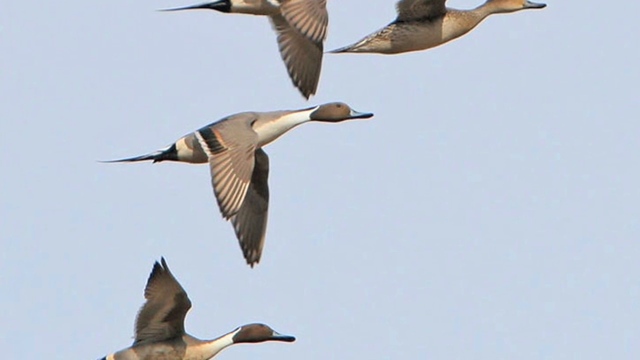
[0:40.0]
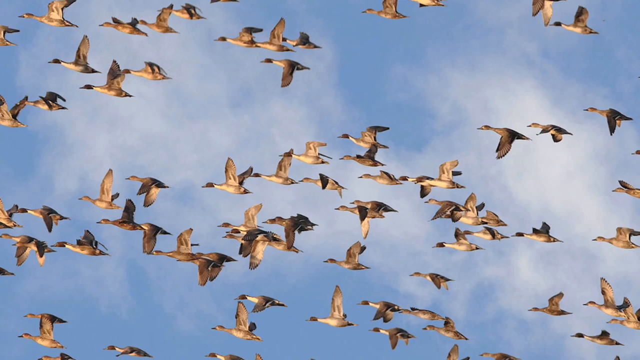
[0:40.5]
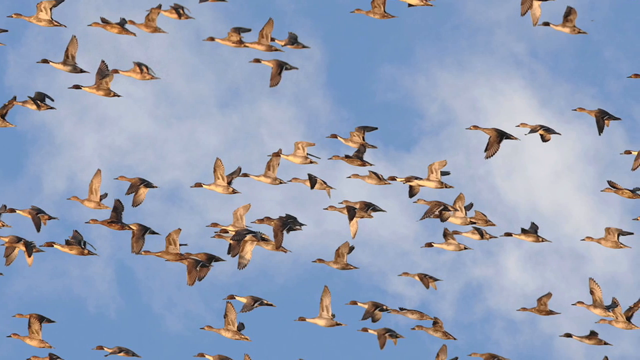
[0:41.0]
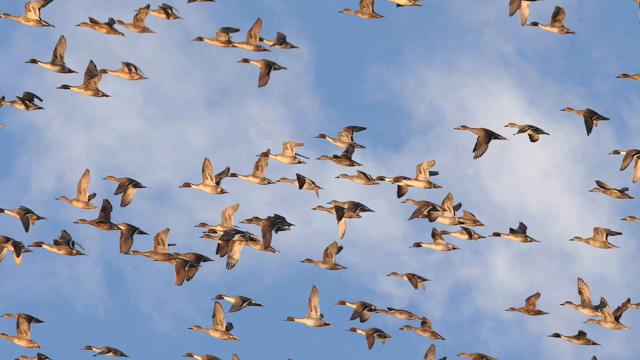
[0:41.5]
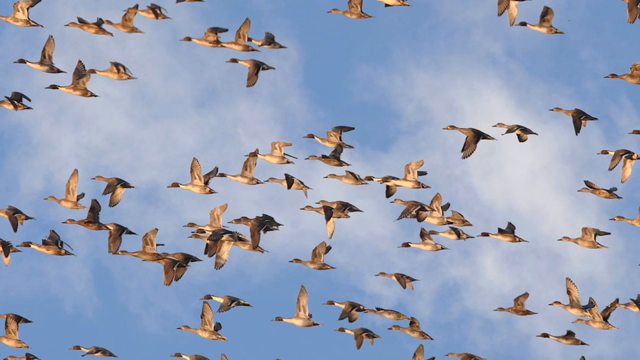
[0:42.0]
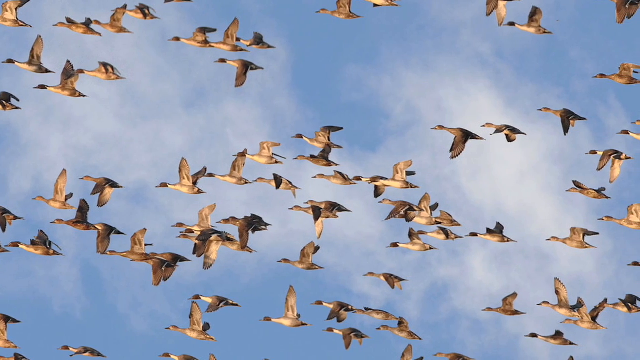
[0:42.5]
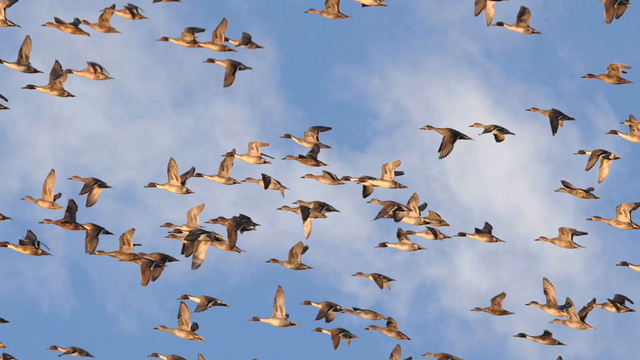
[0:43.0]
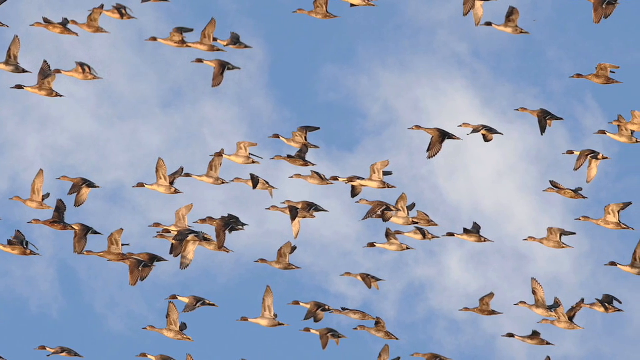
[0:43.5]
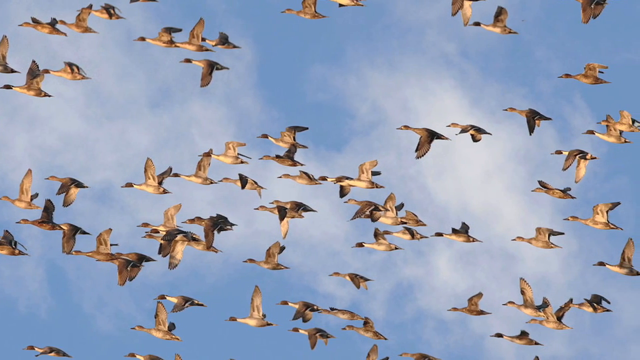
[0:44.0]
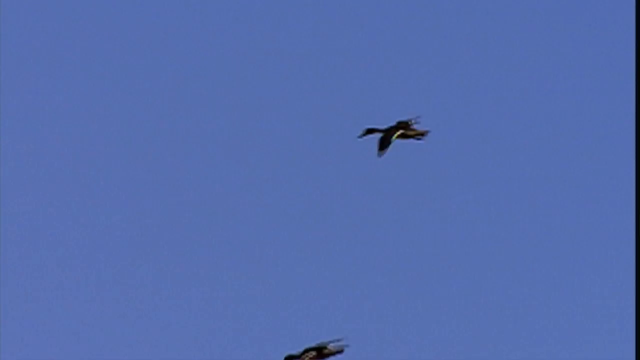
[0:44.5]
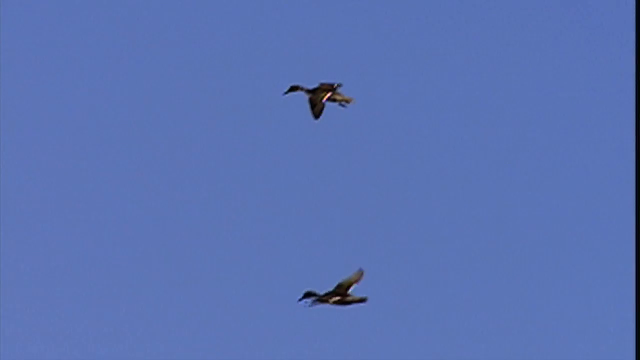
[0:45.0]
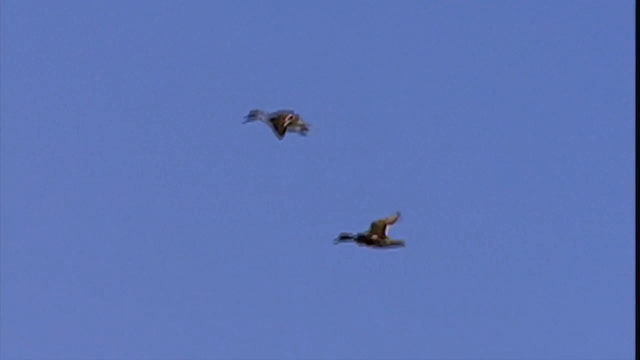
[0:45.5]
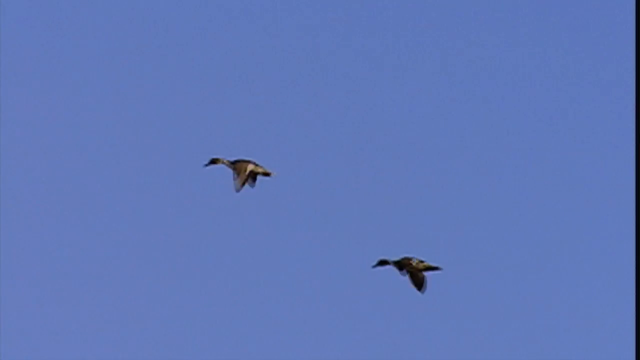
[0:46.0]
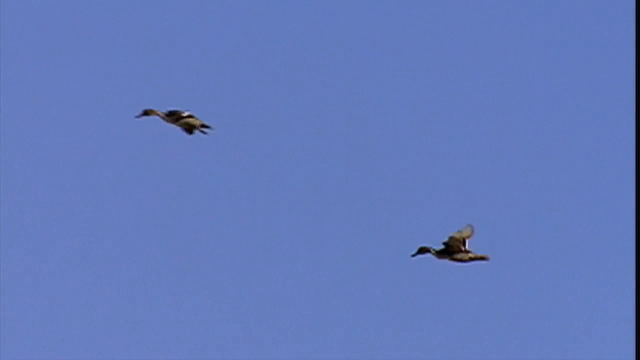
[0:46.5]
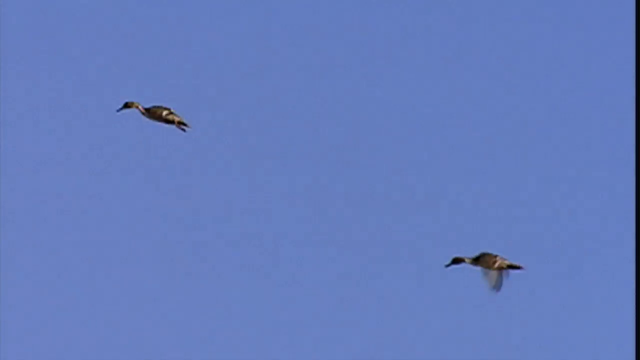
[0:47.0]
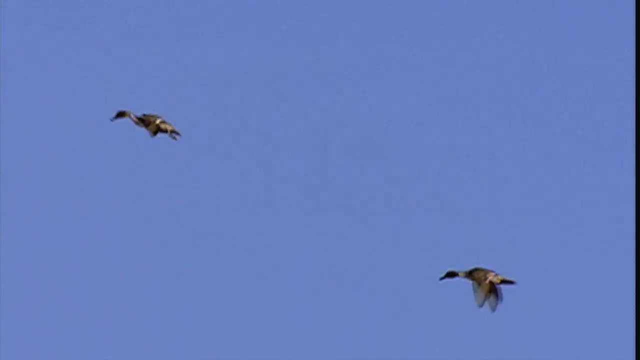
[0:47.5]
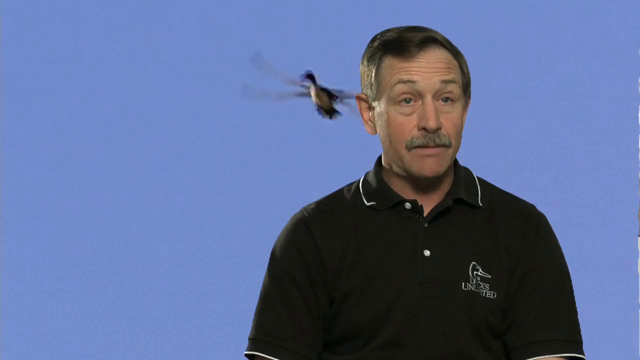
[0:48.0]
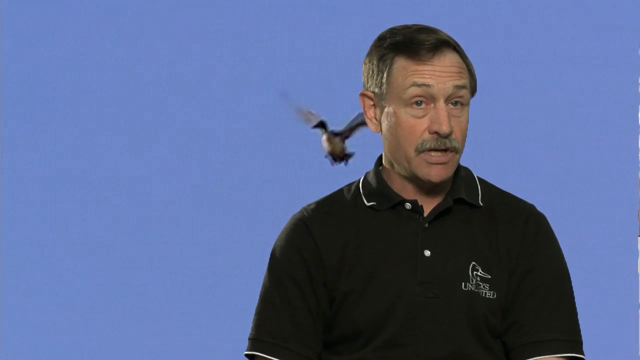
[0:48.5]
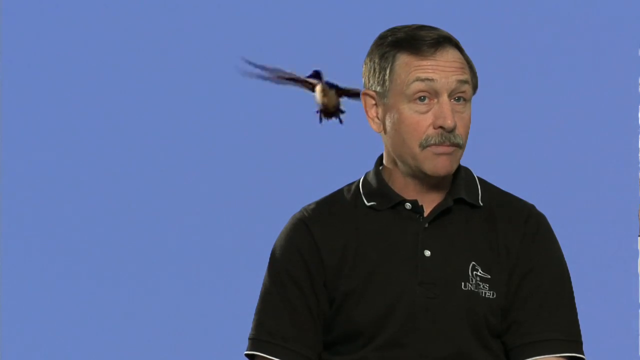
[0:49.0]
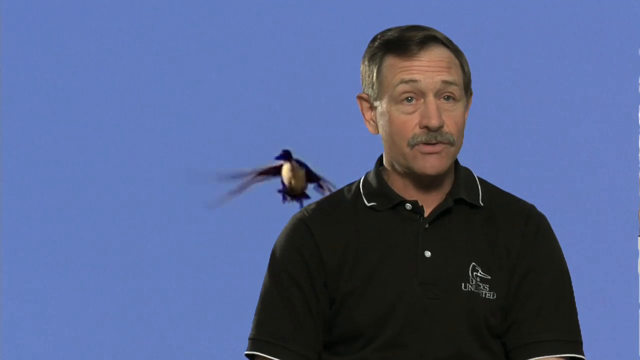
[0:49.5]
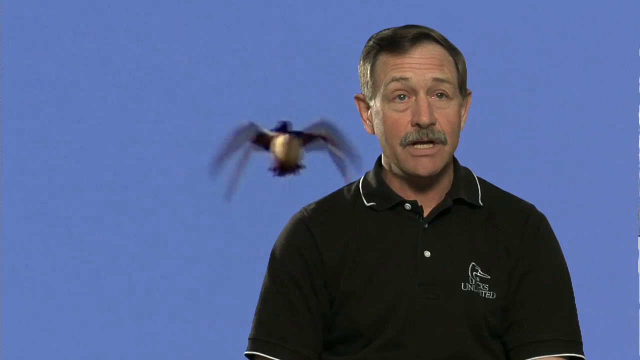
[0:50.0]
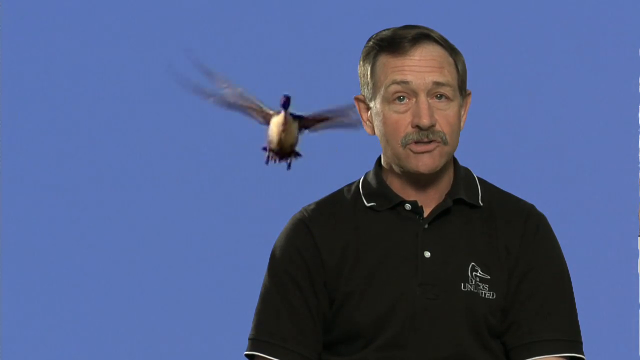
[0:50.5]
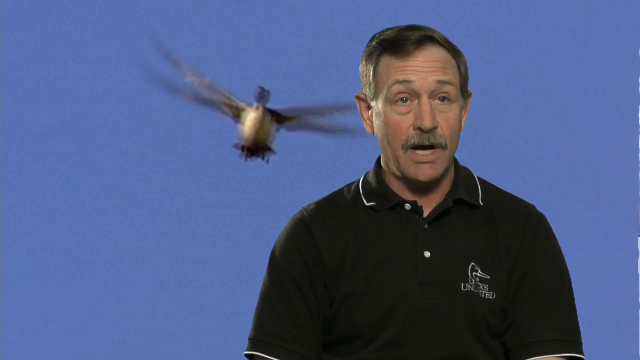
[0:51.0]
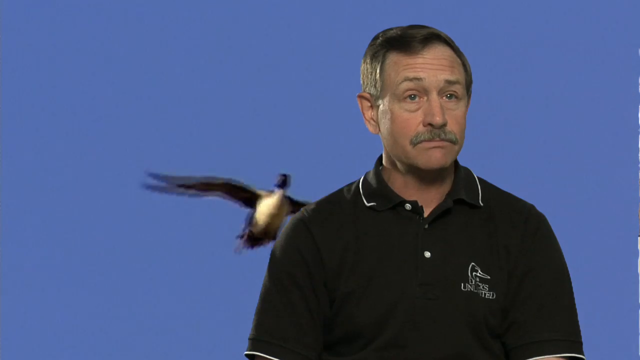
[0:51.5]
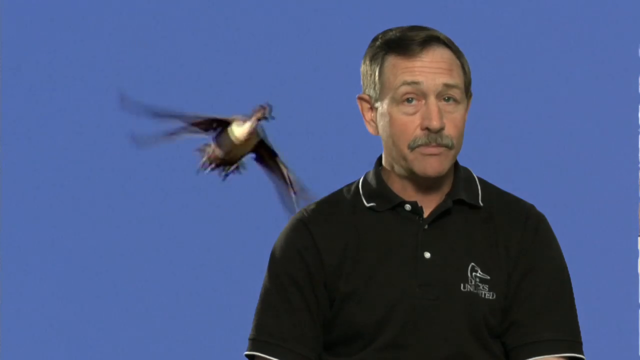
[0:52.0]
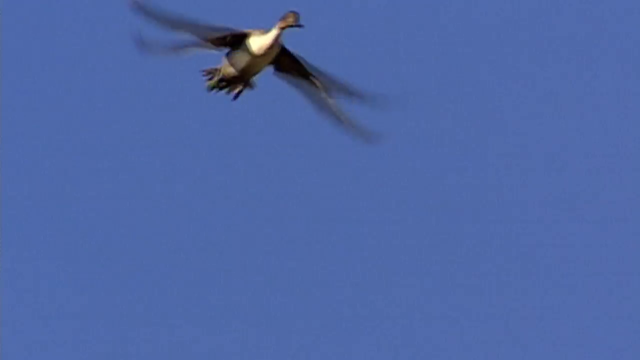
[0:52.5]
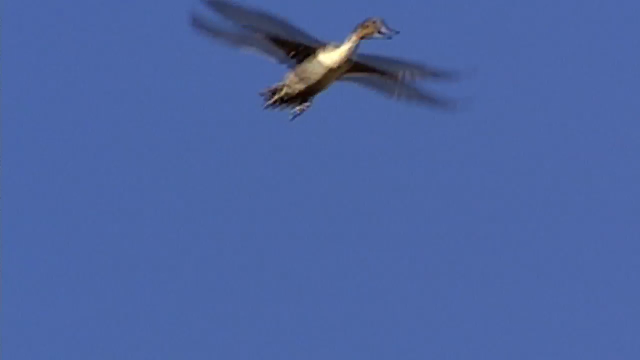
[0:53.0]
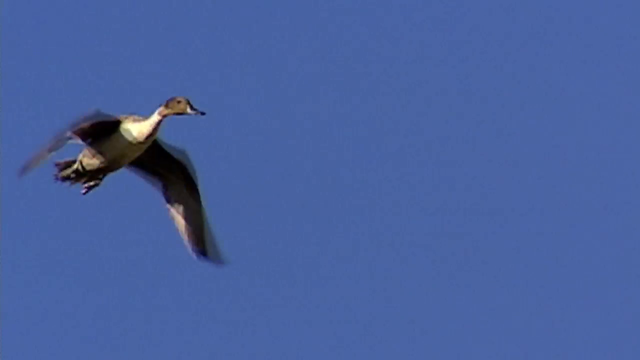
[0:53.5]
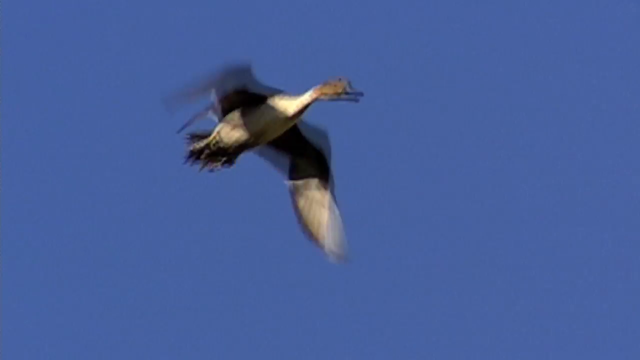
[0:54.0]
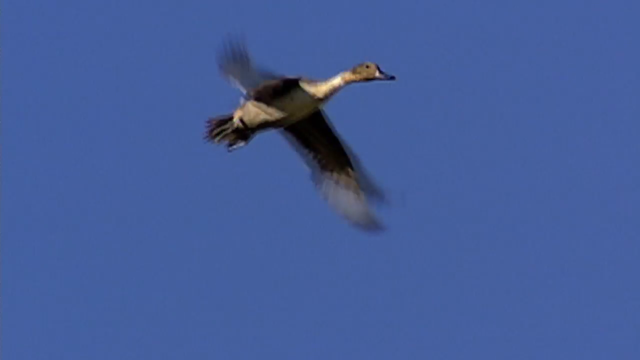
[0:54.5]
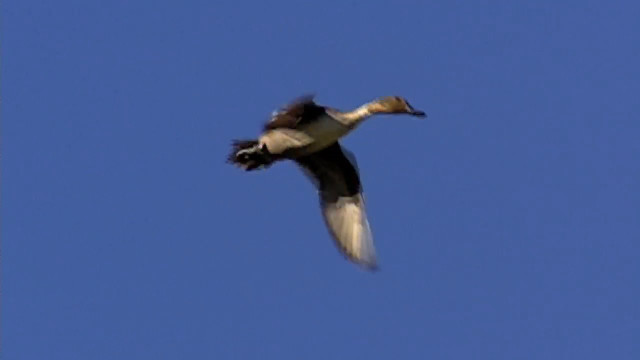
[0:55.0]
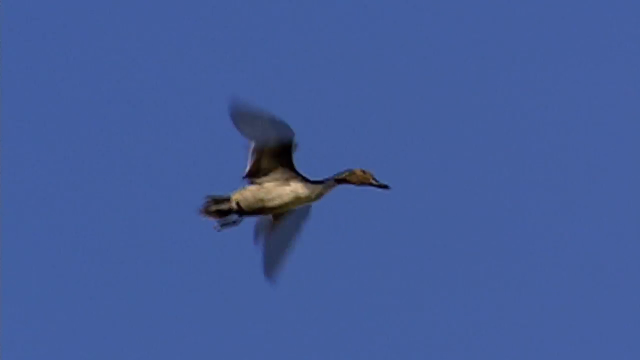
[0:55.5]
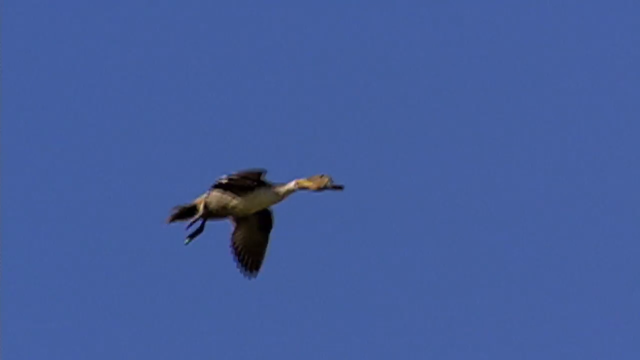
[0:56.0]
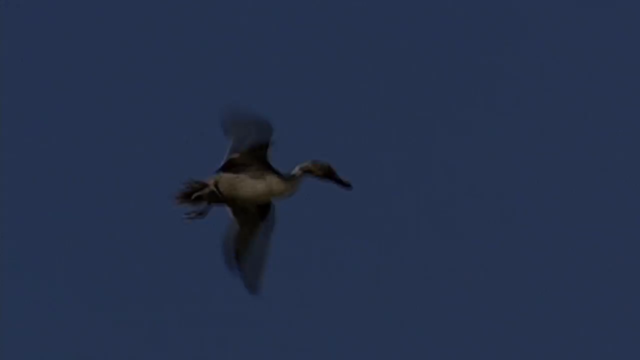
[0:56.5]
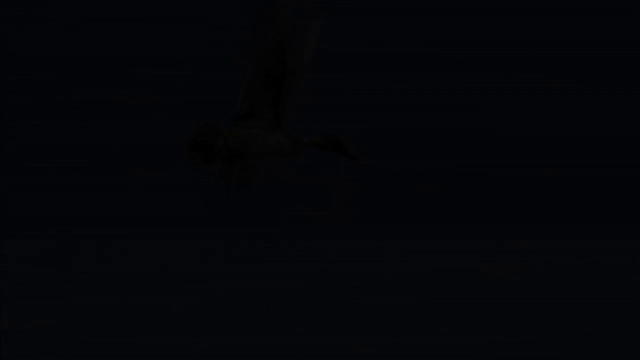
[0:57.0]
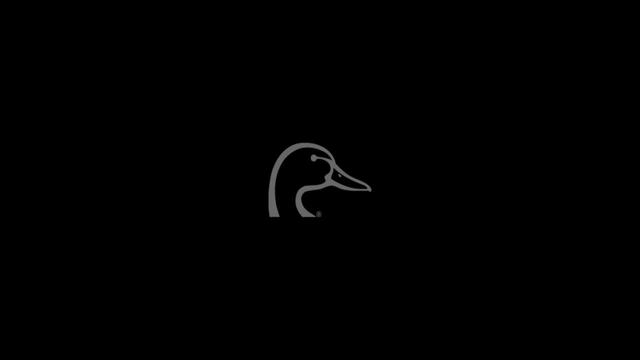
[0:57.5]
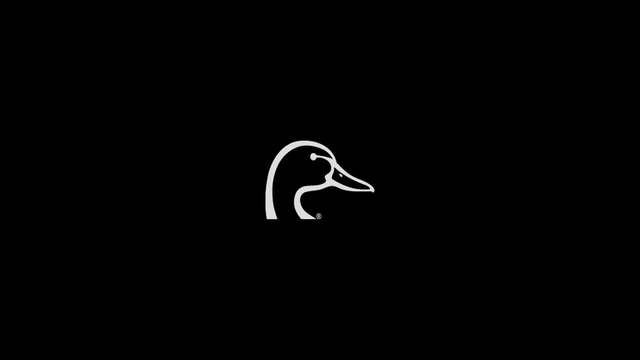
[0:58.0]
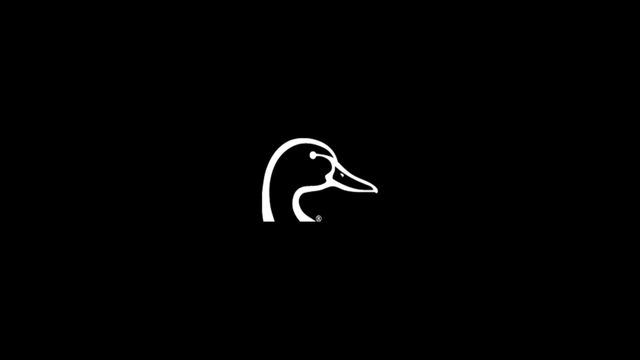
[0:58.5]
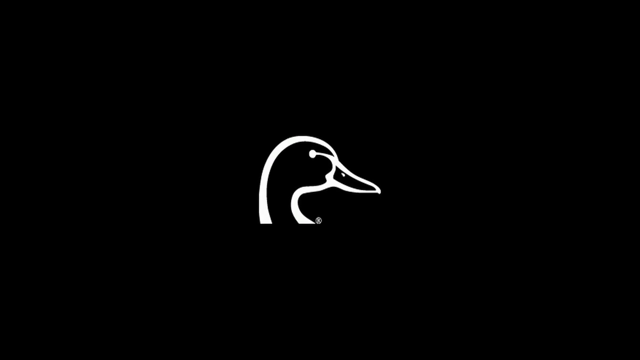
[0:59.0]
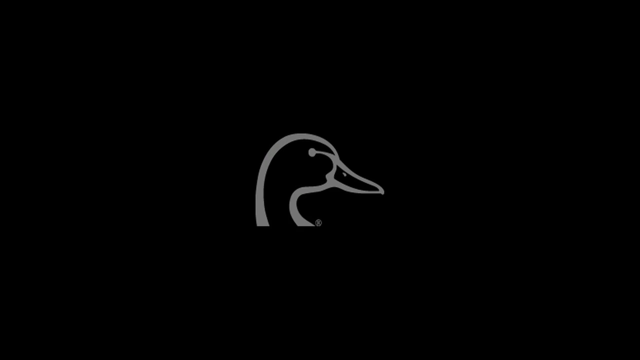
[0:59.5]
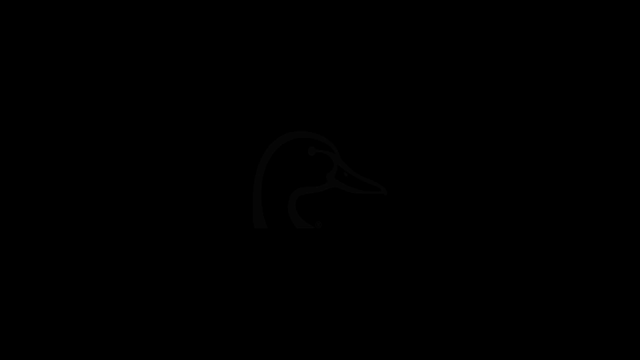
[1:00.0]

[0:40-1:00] Against a clear sky with some white fluffy clouds, about a hundred to a hundred and fifty geese are in mid-flight, seemingly flying toward the left side of the screen while the camera pans. The video switches to two ducks in mid-flight on a clear blue sky background. The man in the black polo with the white-rimmed collar and "Ducks Unlimited" embroidered on the front right comes back on the right-hand side of the screen and talks to the camera. He then disappears, and a single duck flies through the air, flapping heavily, on a blue background. This is replaced by the Ducks Unlimited logo in white on a black background. All of the ducks pictured are mallards colored tan and brown with white underbellies and black tails.